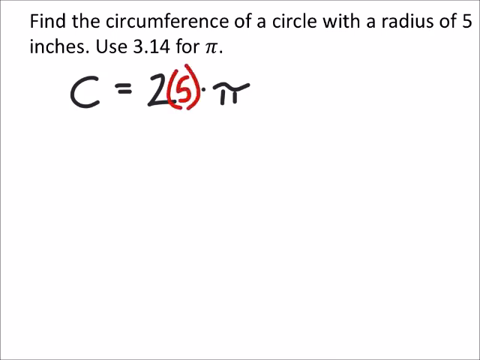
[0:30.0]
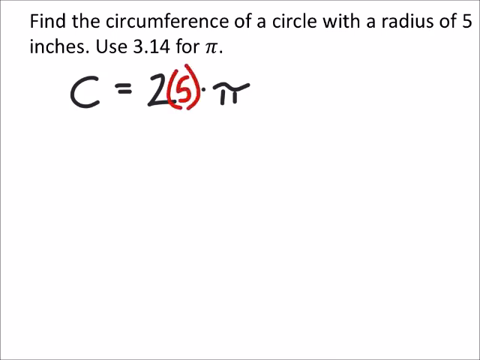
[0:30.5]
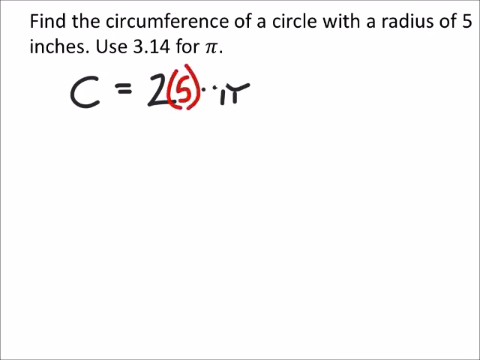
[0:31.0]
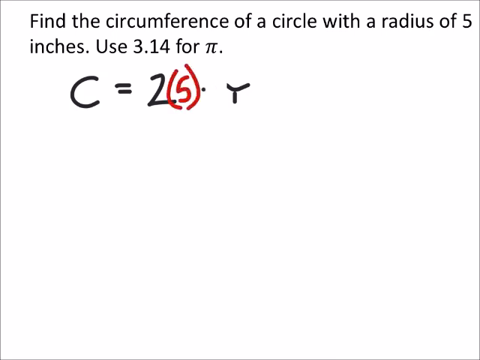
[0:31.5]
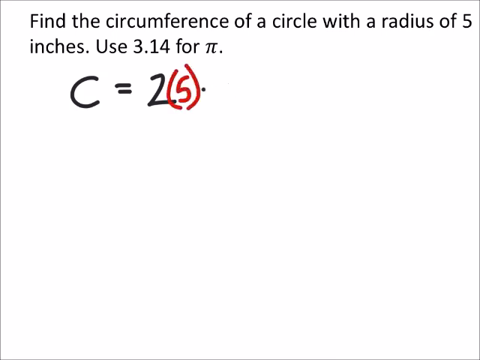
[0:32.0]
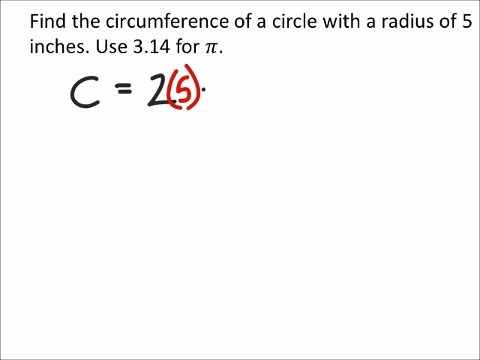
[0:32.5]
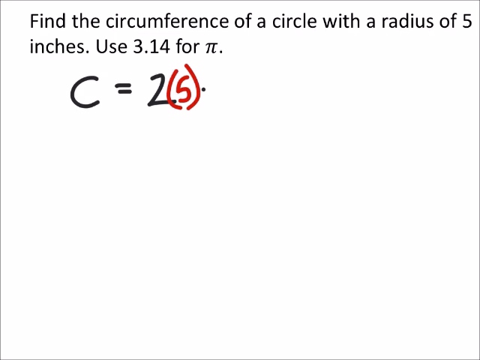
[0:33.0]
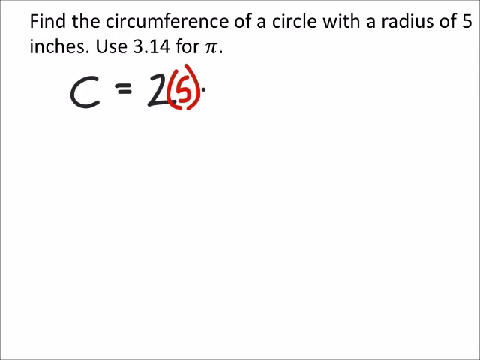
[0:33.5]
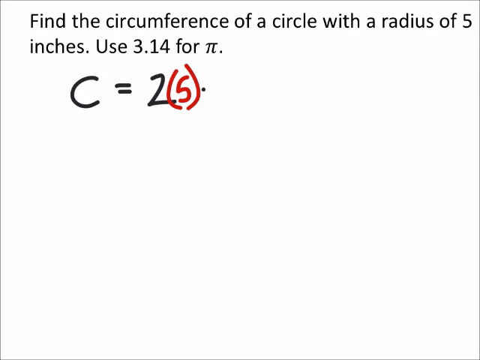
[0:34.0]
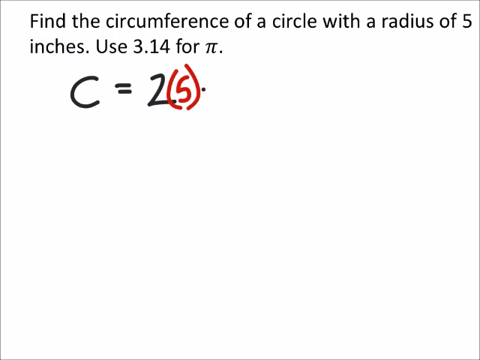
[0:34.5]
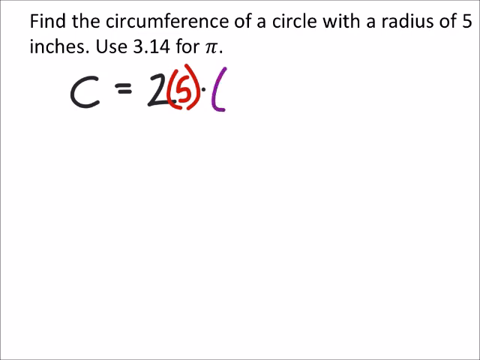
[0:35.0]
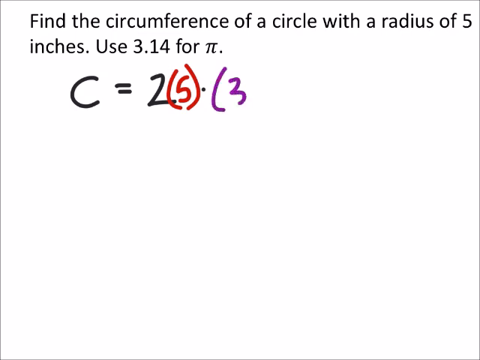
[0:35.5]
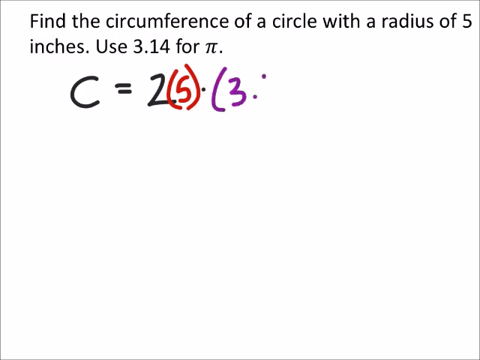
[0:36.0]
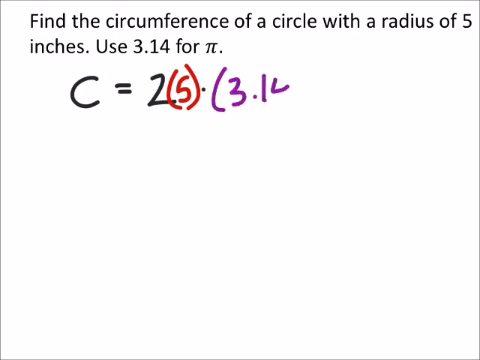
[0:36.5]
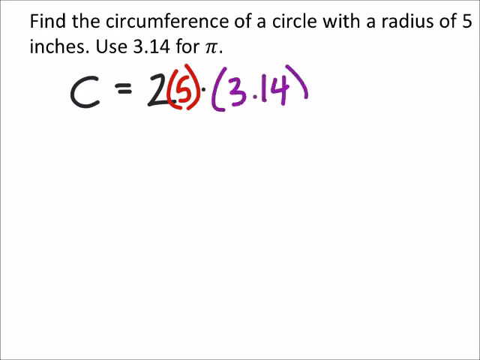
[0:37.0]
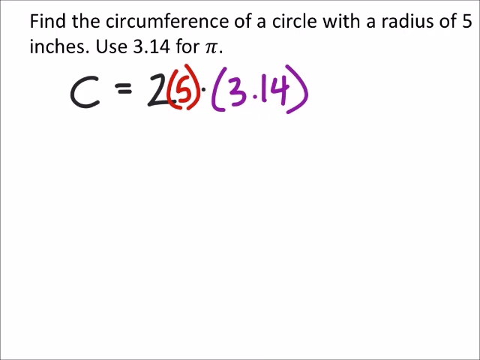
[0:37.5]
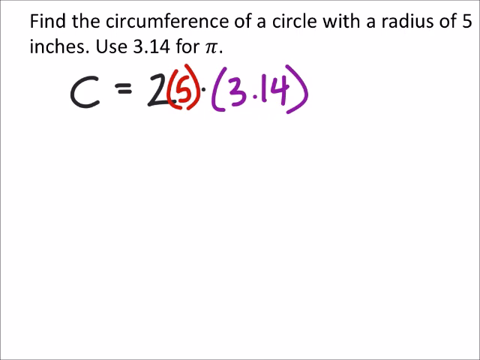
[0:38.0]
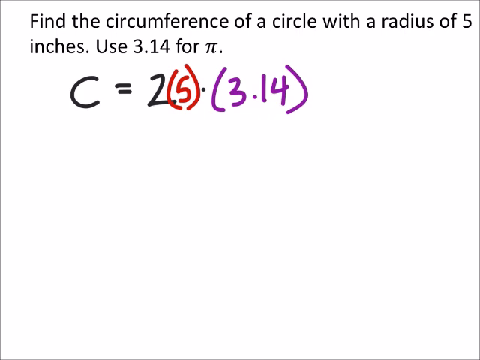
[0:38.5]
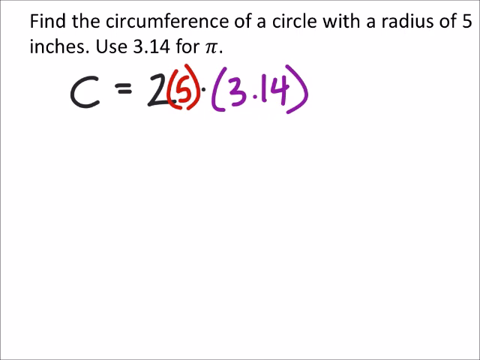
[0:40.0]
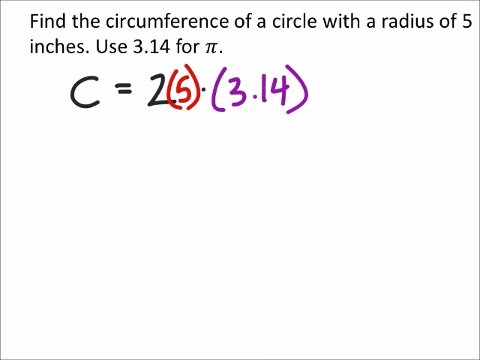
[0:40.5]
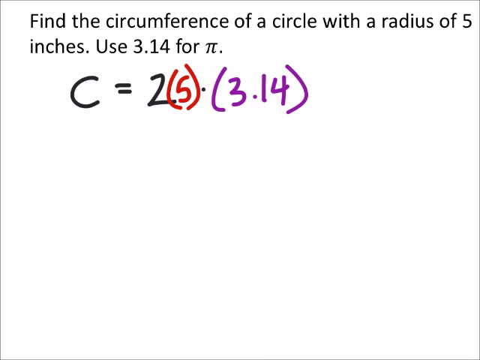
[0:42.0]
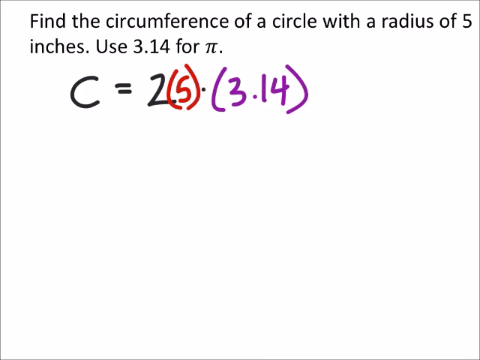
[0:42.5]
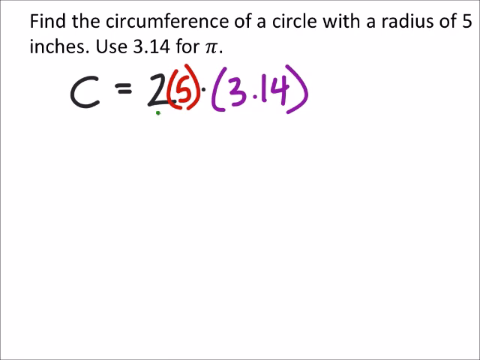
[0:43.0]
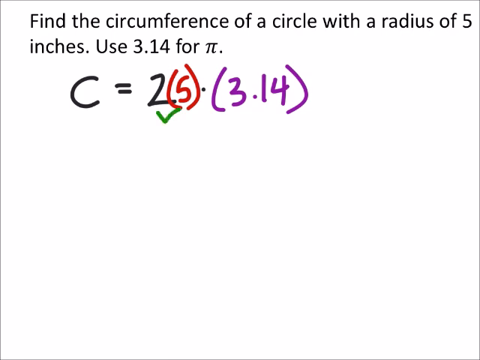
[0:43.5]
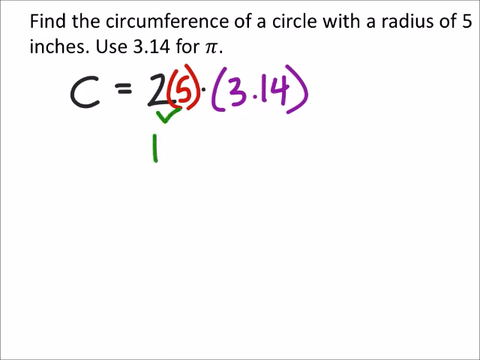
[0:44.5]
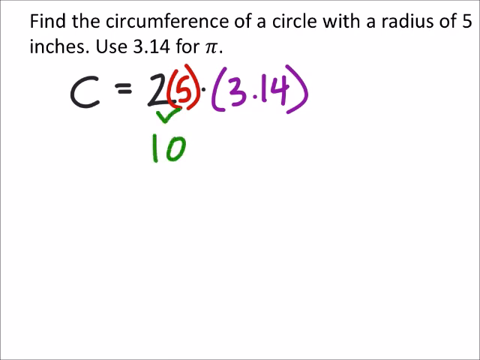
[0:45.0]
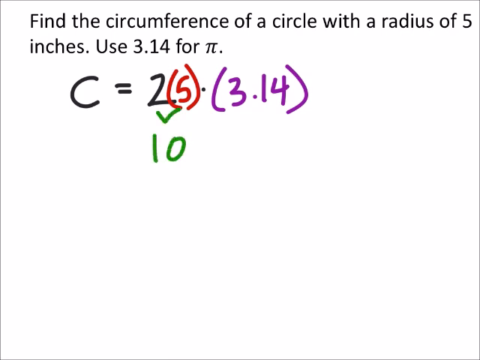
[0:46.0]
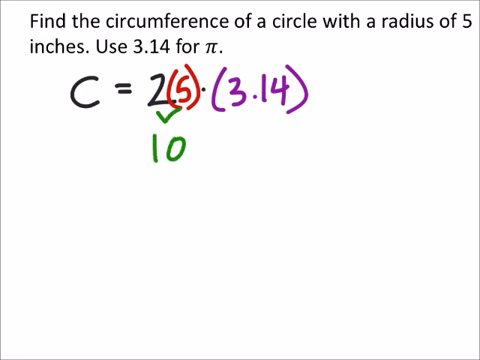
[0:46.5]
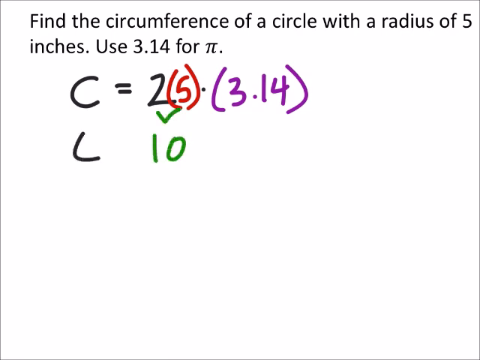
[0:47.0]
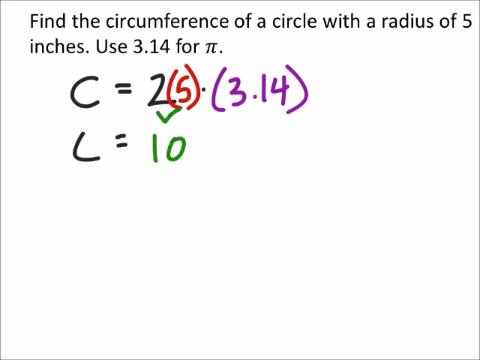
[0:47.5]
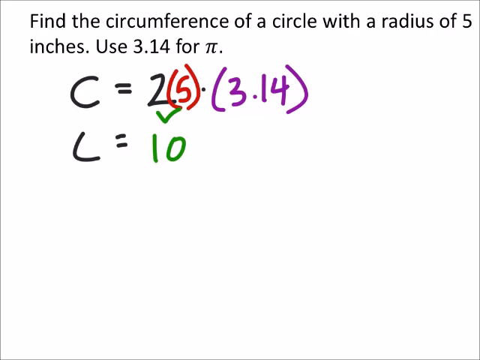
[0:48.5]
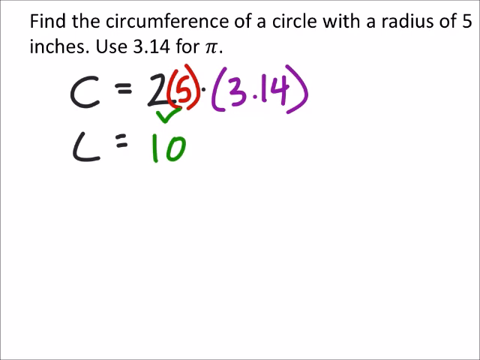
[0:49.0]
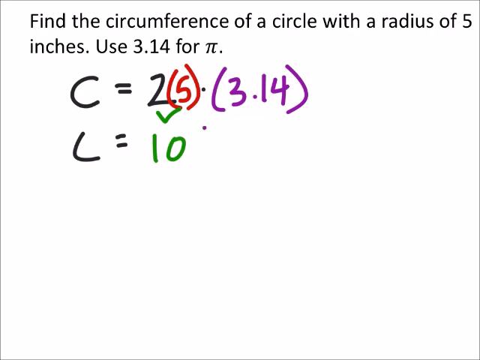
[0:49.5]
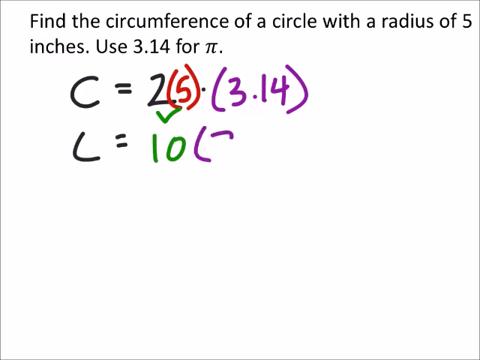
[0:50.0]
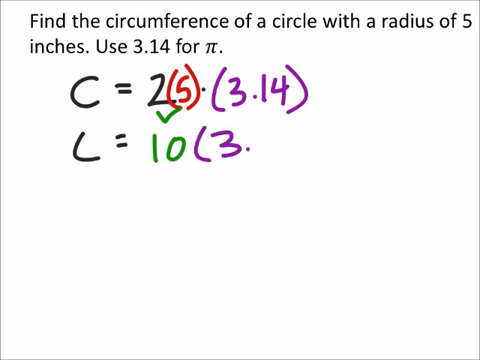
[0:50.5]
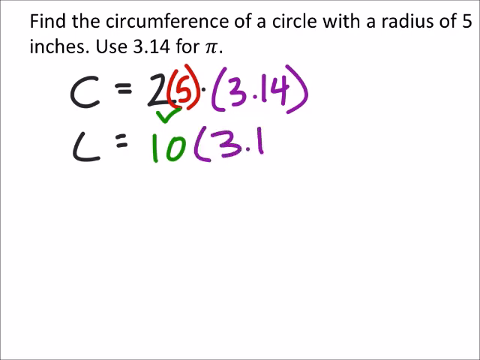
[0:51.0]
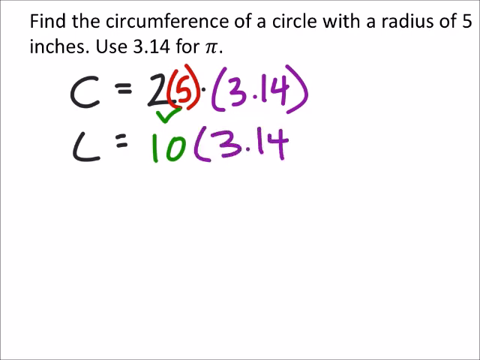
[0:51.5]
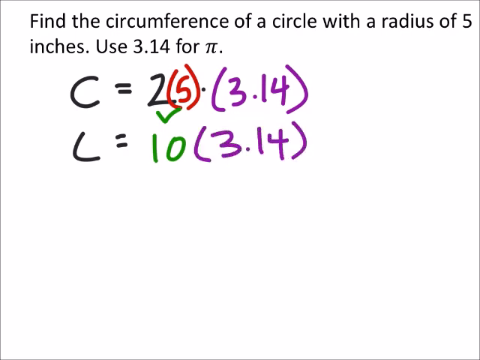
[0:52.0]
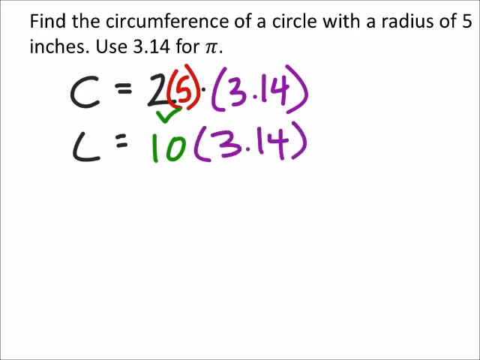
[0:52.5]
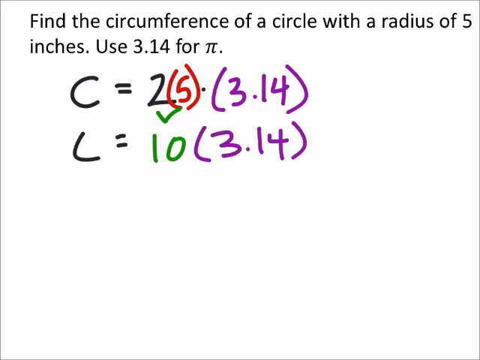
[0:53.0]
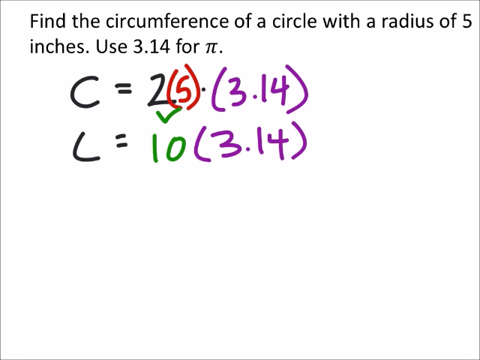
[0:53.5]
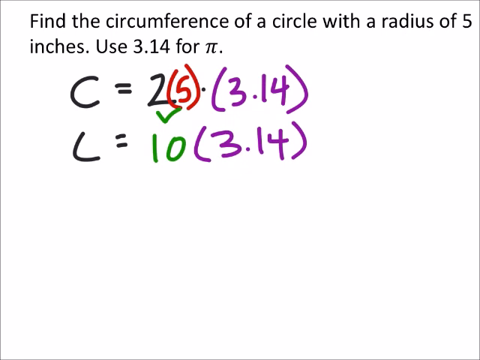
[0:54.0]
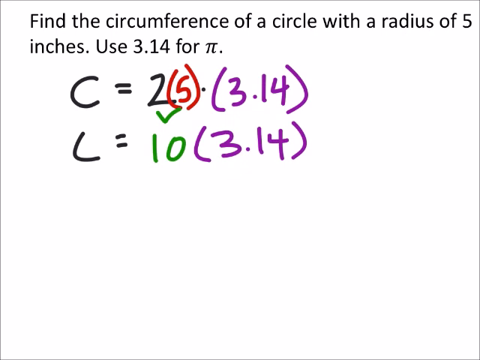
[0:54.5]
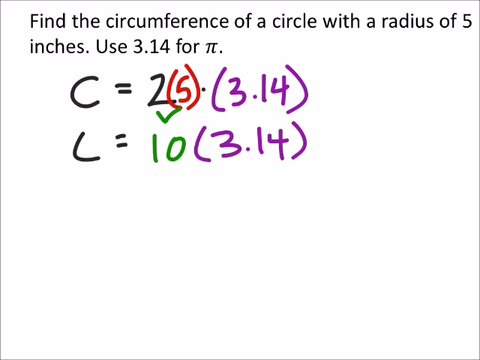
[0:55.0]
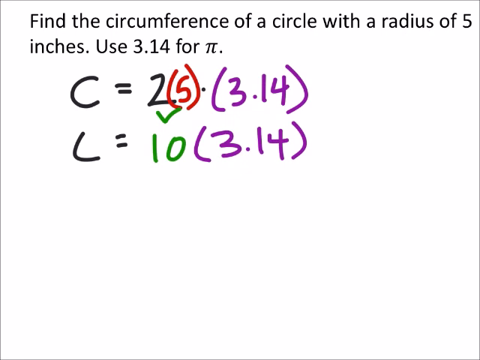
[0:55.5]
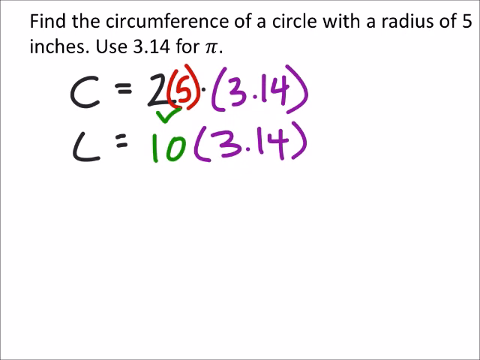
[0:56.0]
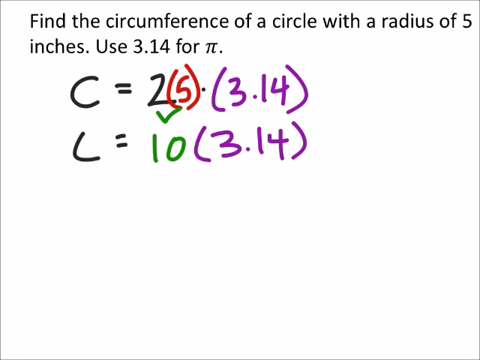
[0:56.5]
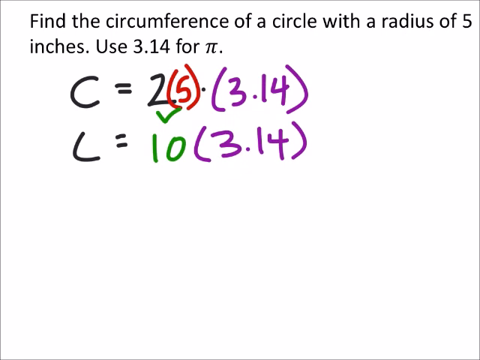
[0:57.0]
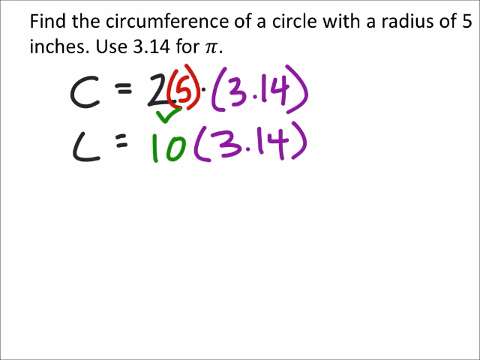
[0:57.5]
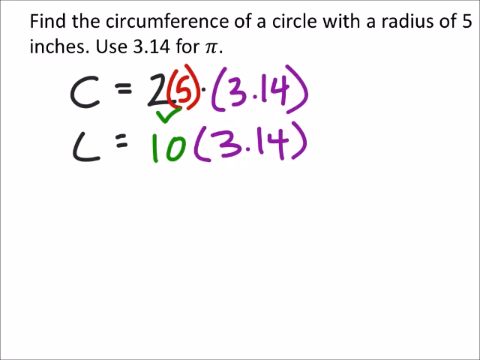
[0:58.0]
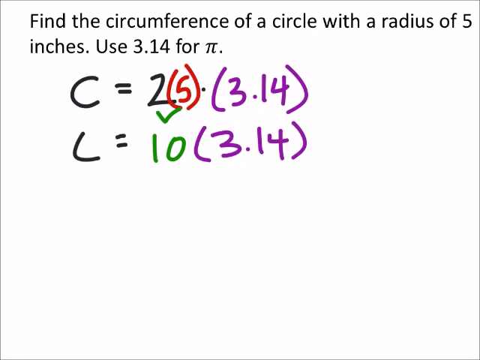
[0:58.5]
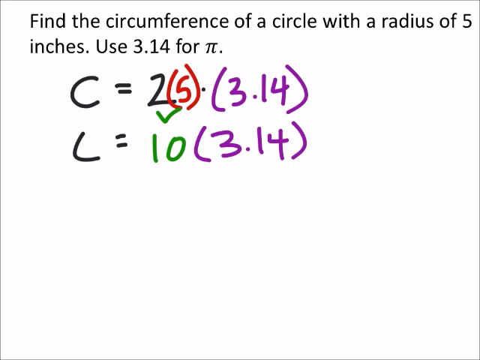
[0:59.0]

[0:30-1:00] The mathematical problem continues to be worked out on screen. The background is white, with black printed text across the top reading "find the circumference of a circle with a radius of five inches. Use 3.14 for pi." Underneath is black handwritten text reading "c = 2 · π", with a 5 in brackets drawn in red after the 2, so it reads "c = 2(5) · π". The pi is erased and replaced by purple handwritten text reading "(3.14)". A green arrow is then drawn under the number 2, with the number 10 in green. To the left of that, the letter C is drawn in black pen, followed by an equal sign. After the green 10, purple brackets with the number 3.14 in them are drawn.